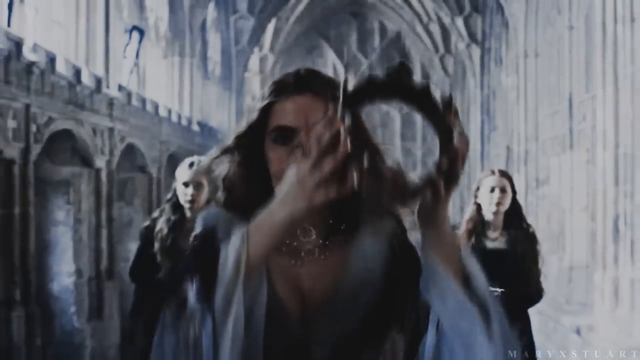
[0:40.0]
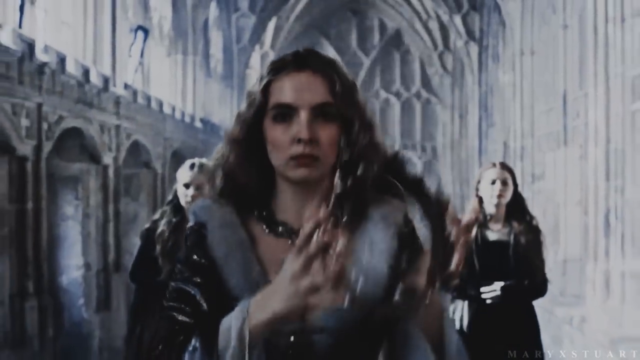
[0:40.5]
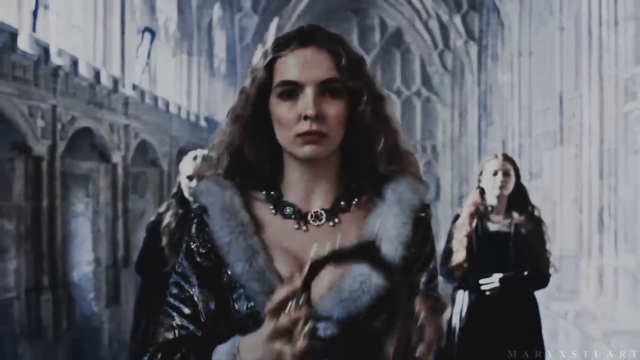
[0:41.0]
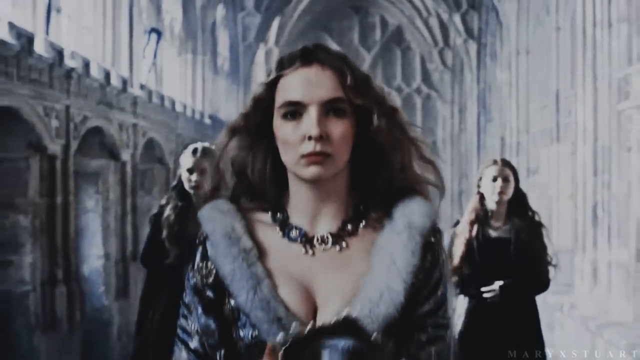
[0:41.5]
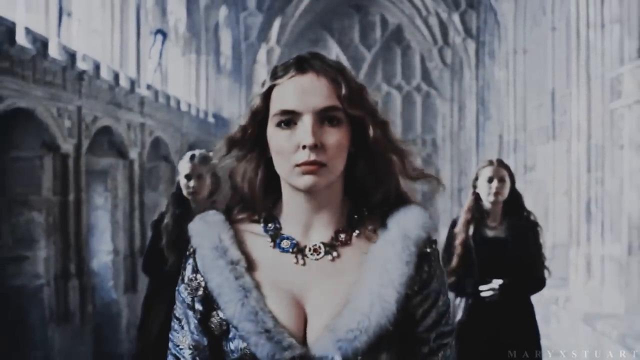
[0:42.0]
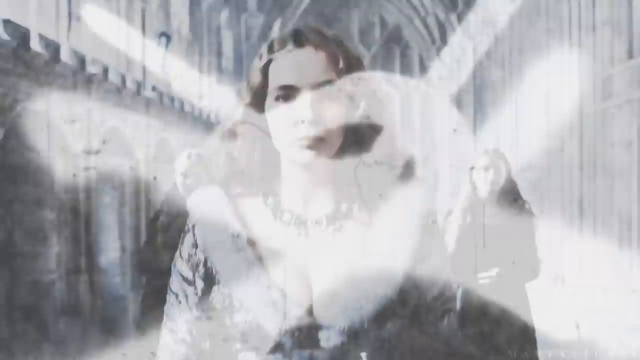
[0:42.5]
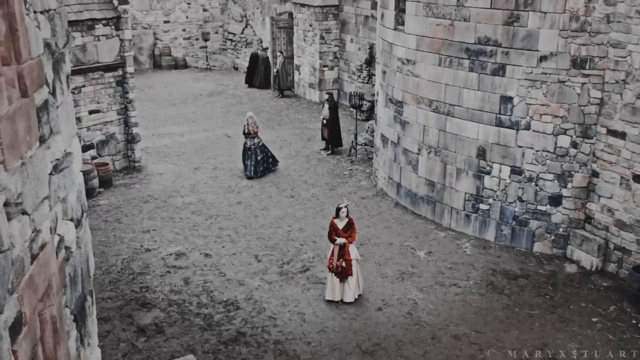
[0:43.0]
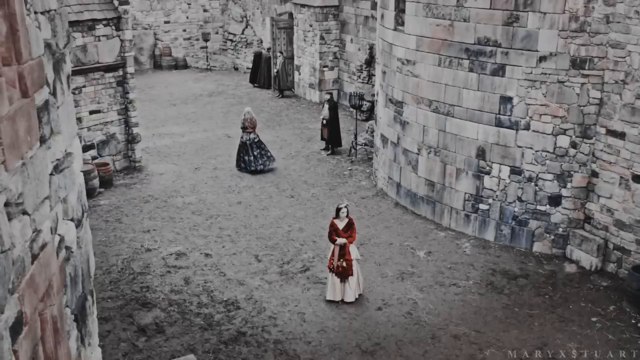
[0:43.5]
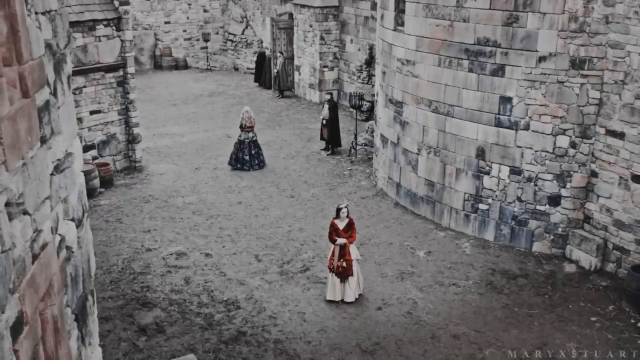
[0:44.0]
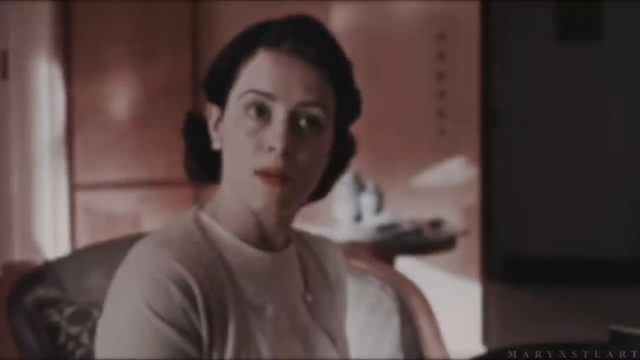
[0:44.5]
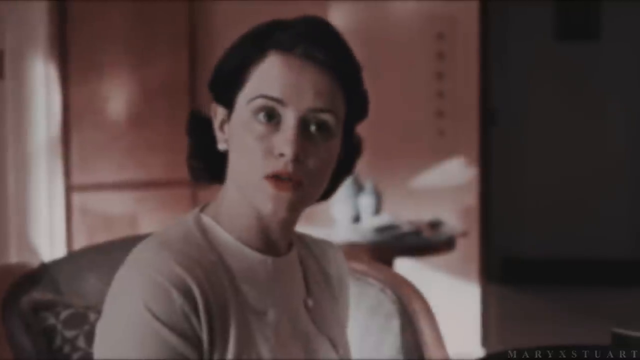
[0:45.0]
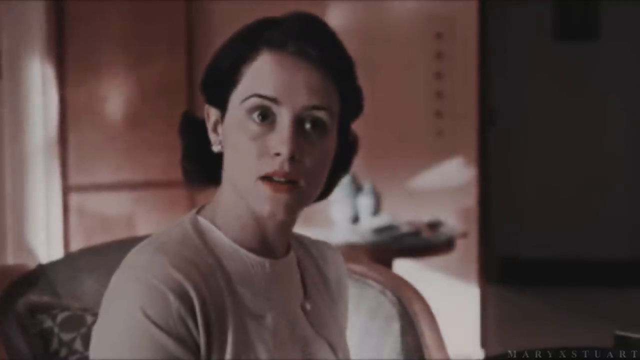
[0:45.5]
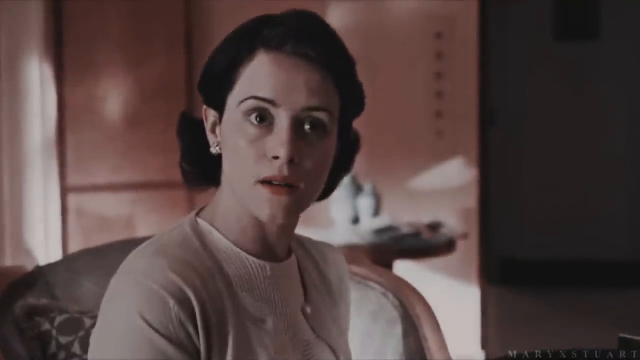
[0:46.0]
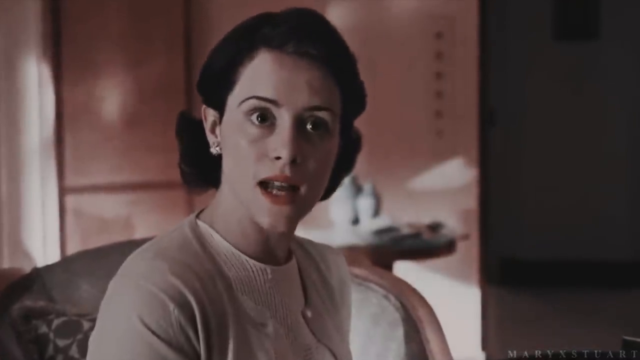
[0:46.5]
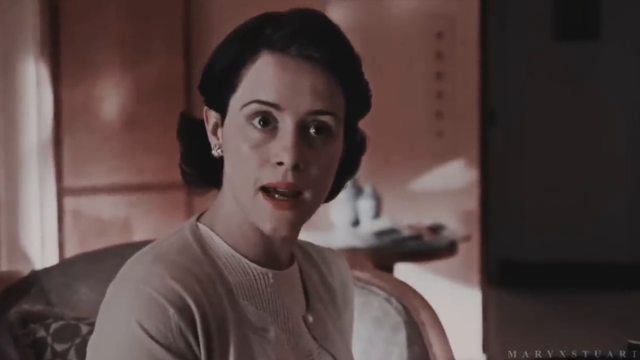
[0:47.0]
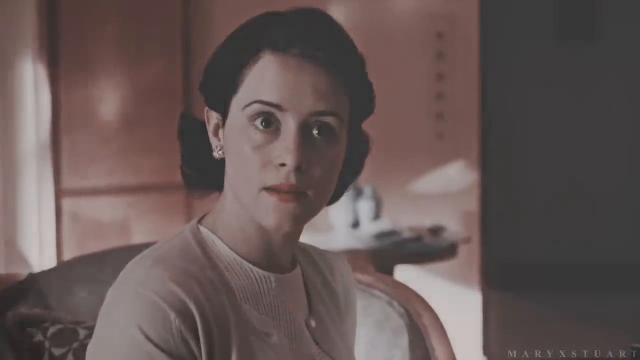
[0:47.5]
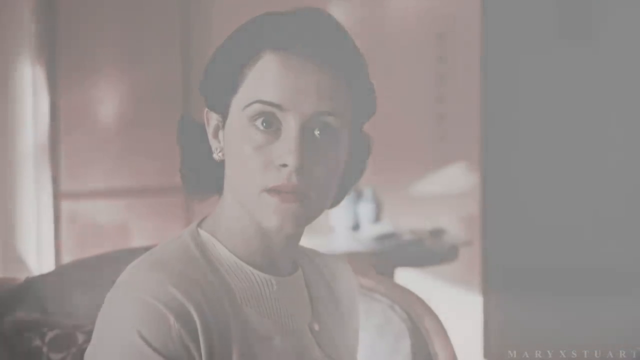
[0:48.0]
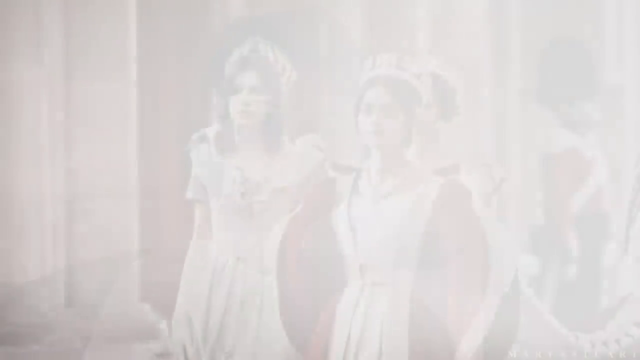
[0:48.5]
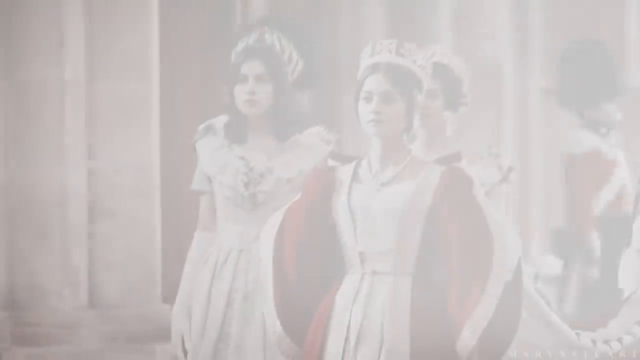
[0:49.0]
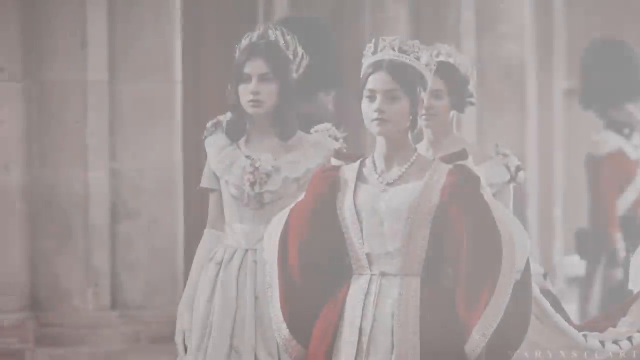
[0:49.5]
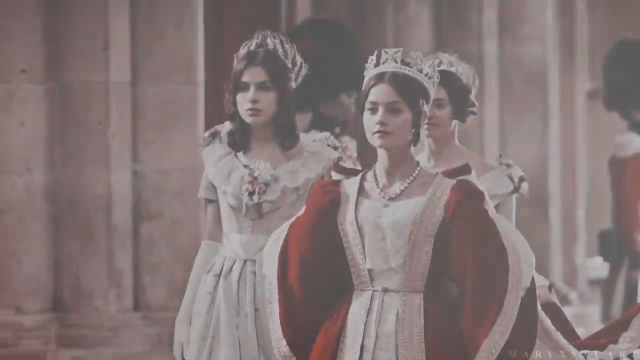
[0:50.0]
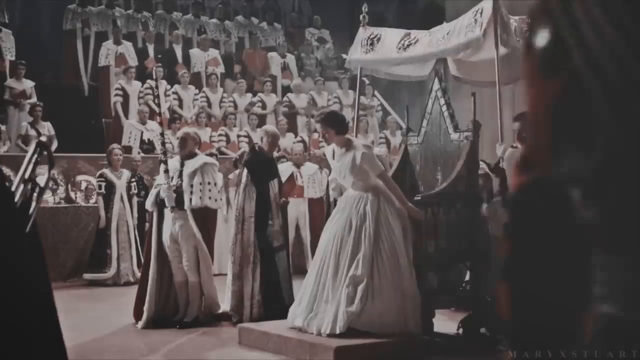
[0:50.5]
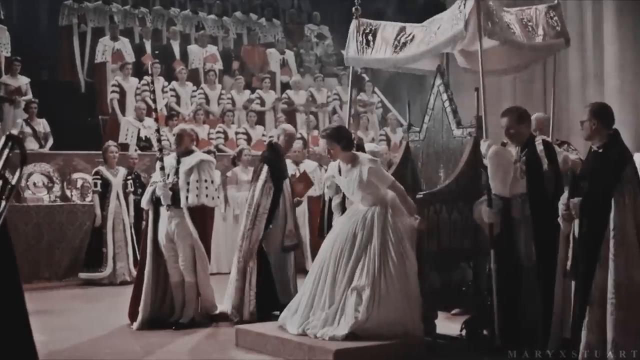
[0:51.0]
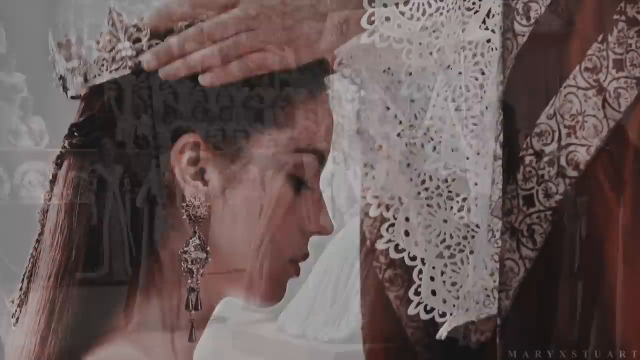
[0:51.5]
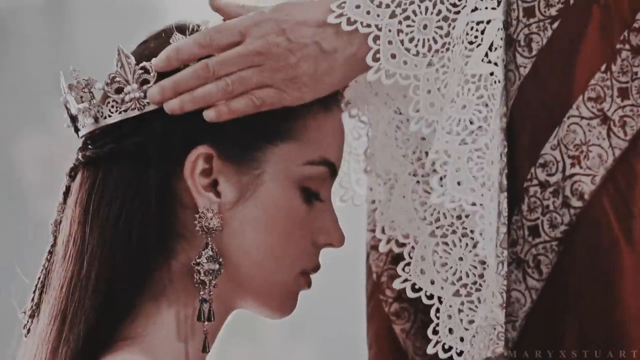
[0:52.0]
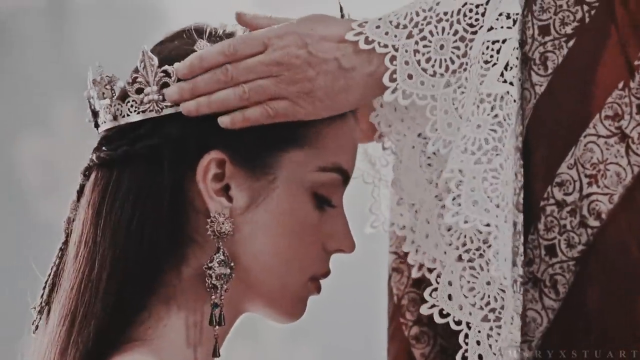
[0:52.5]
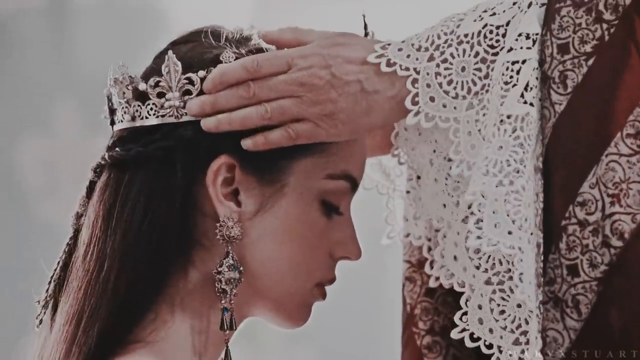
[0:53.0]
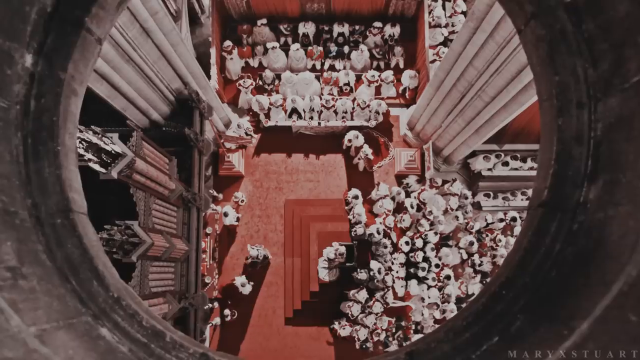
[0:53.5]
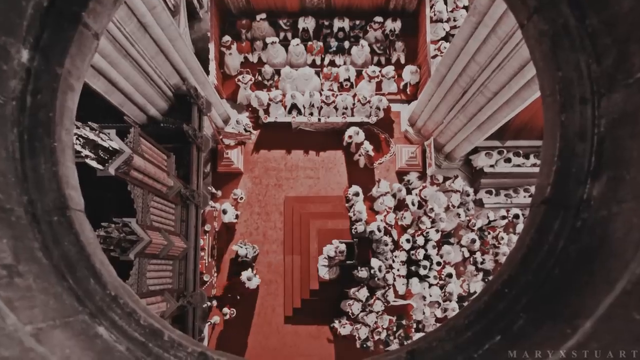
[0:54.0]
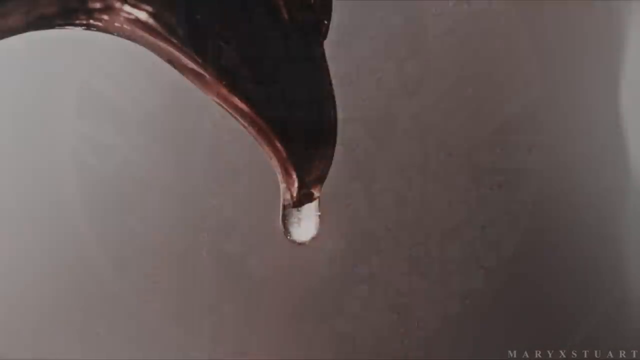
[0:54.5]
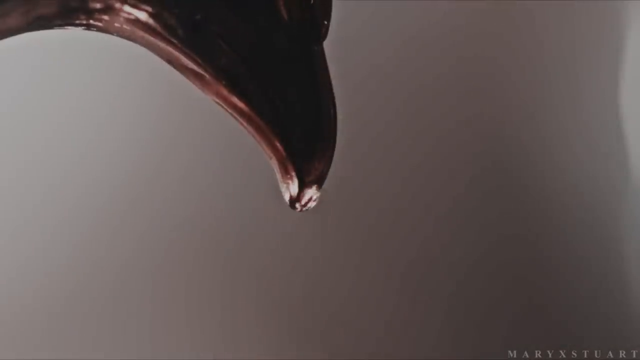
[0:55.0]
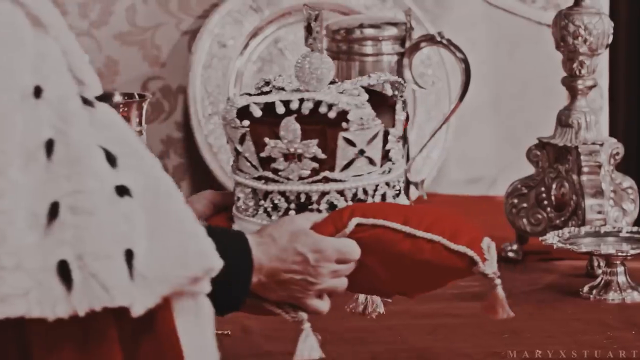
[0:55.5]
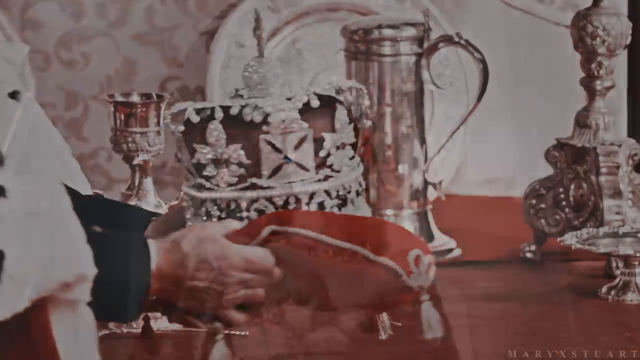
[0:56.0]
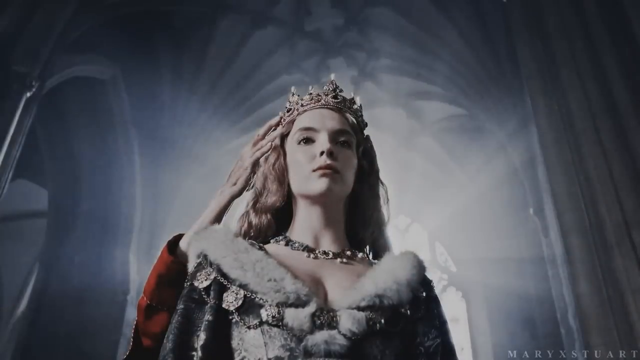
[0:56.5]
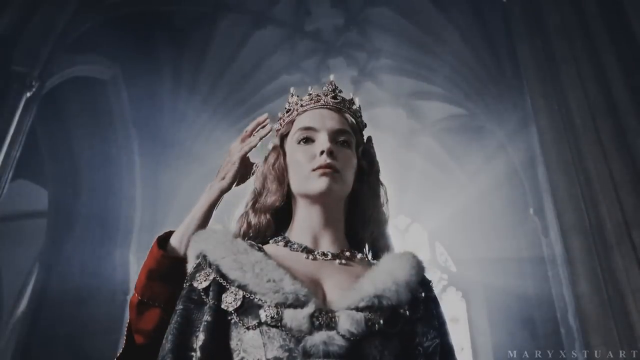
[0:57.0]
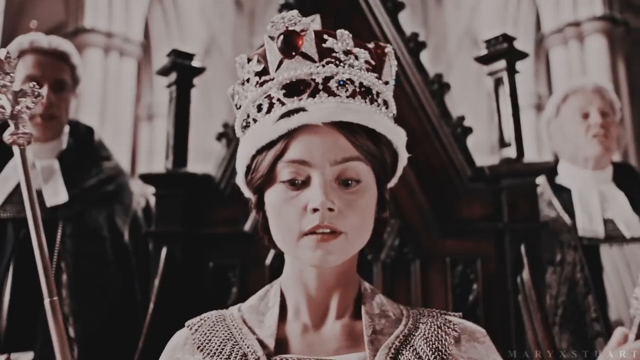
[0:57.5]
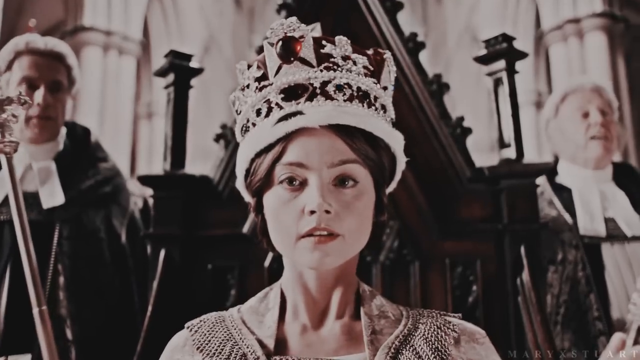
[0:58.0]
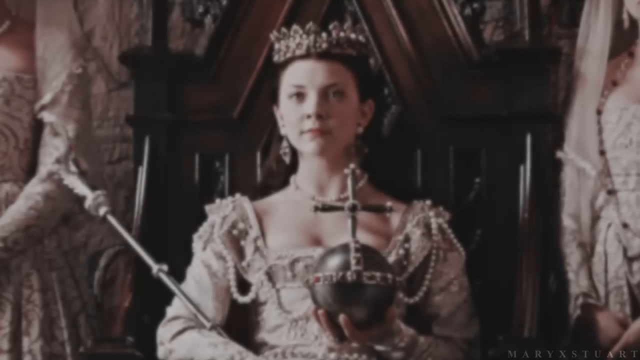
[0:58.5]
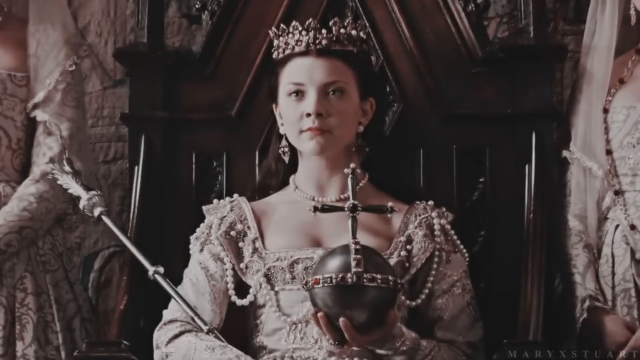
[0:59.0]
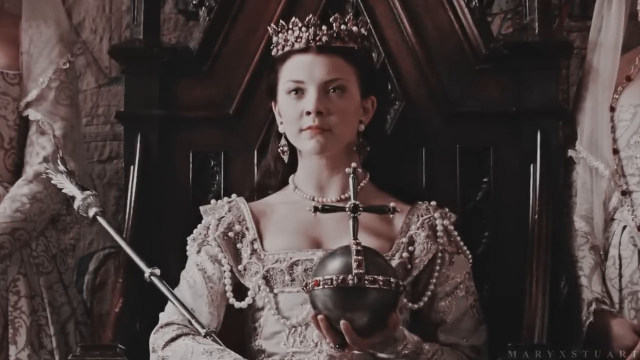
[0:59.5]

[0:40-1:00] In the center of the wide-format frame is a woman dressed like a queen in a long gown with fur along the whole collar line, seen from the chest up. She holds a crown in her hands; at first it looks like she is either putting it on or taking it off. Two women follow behind her on the left and right; the left one appears to be blonde and the right one appears to be brown-haired, and both wear dark dresses. The woman brings the crown down off her head to right in front of her as they proceed toward the camera. In a different view, apparently the same woman walks in the distance diagonally up and to the left, alongside another woman in a red dress with a white undergarment below it, who also has some sort of crown or tiara on her head. High brick walls surround the two women. Another scene then shows a woman in the center, seen from the shoulders up, her body facing roughly to the right and her face toward the camera.